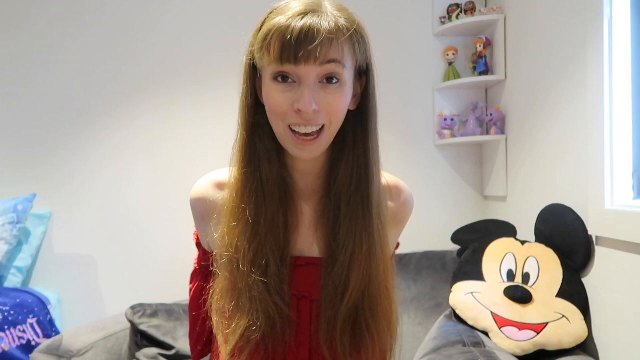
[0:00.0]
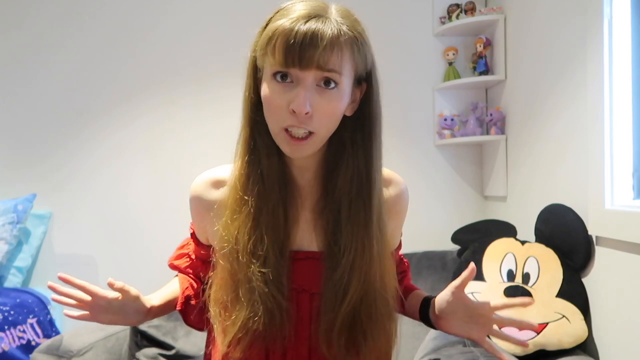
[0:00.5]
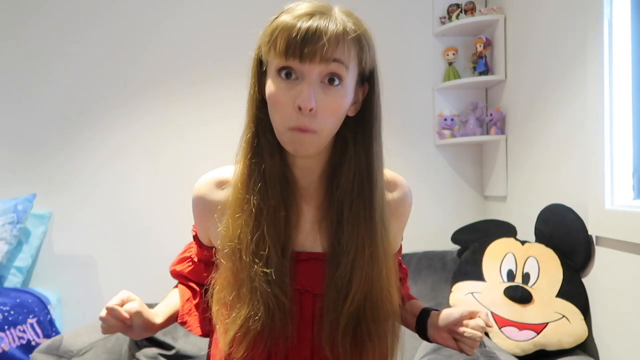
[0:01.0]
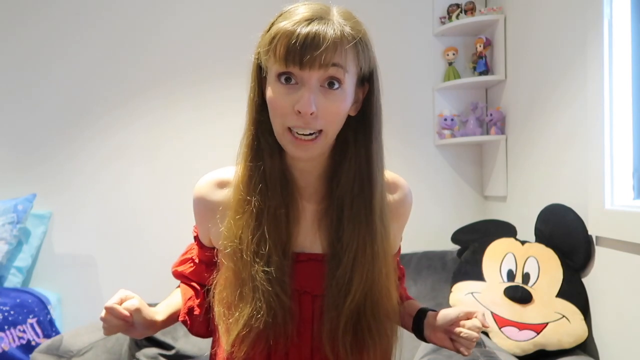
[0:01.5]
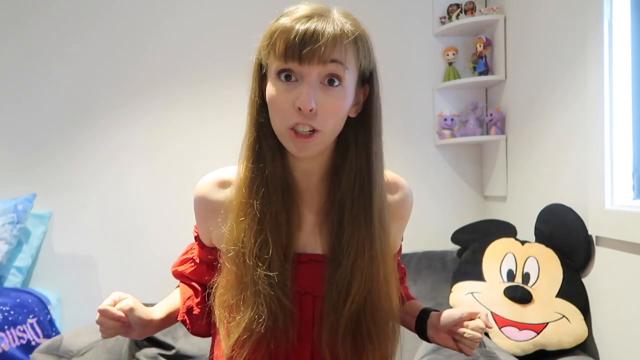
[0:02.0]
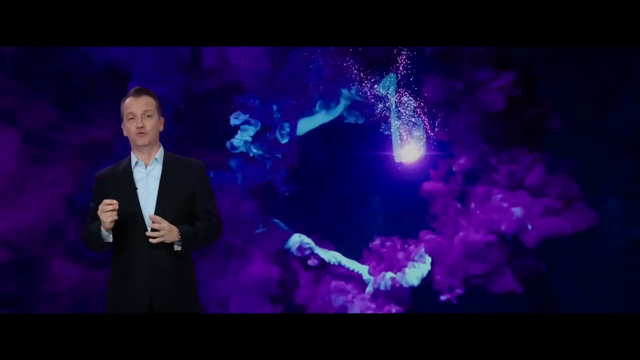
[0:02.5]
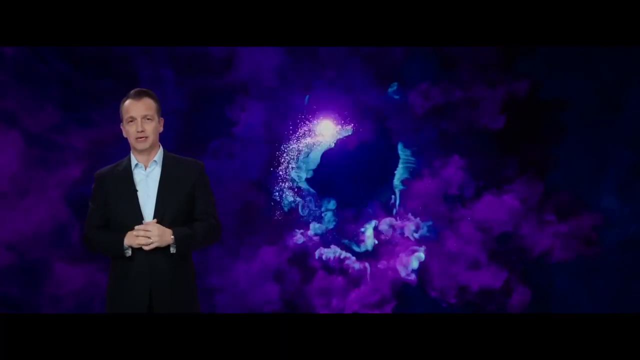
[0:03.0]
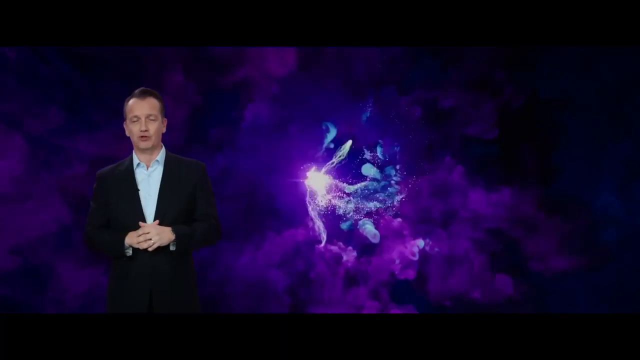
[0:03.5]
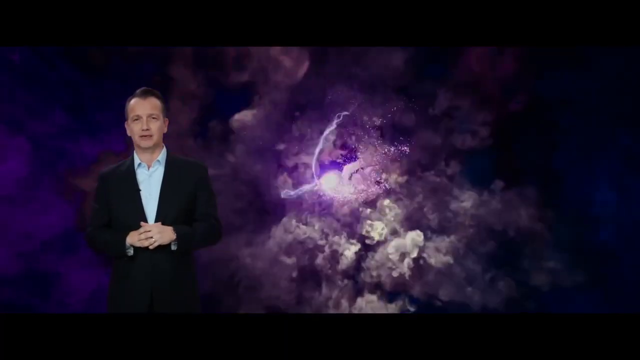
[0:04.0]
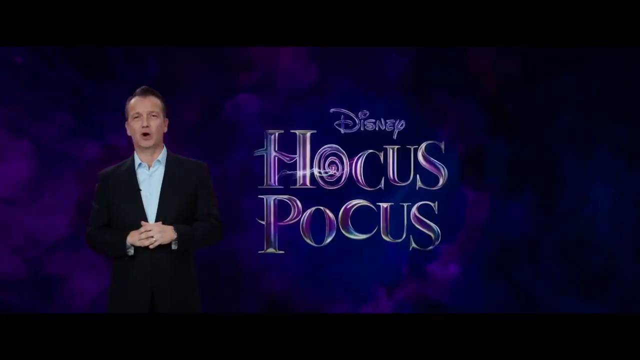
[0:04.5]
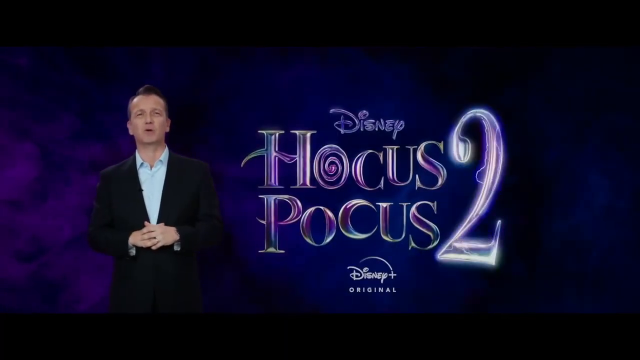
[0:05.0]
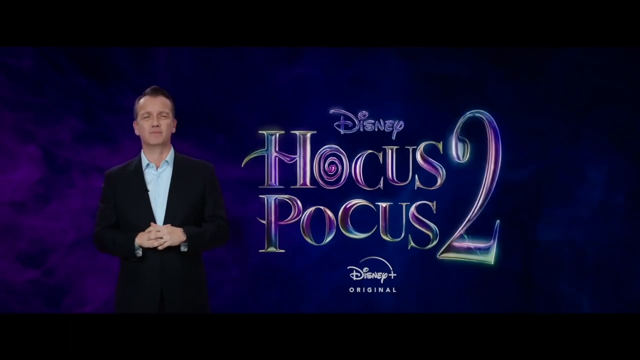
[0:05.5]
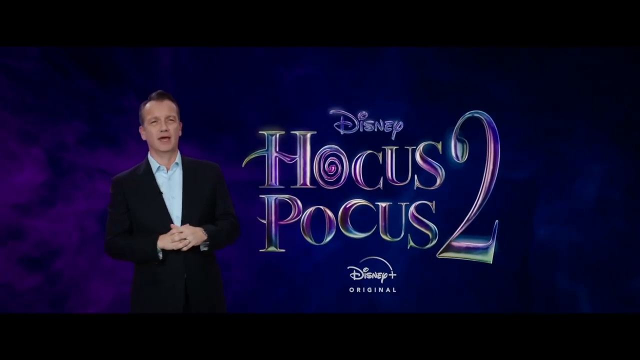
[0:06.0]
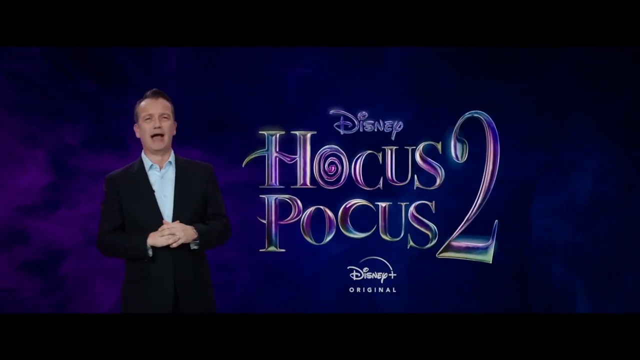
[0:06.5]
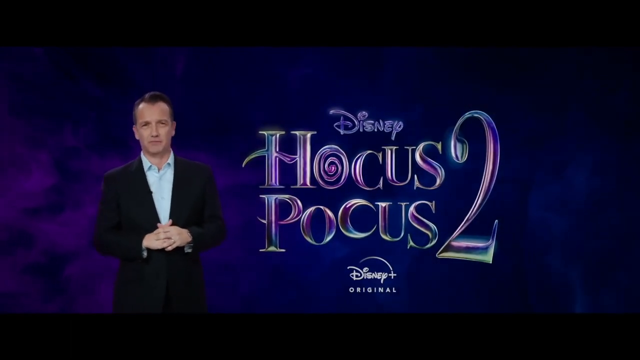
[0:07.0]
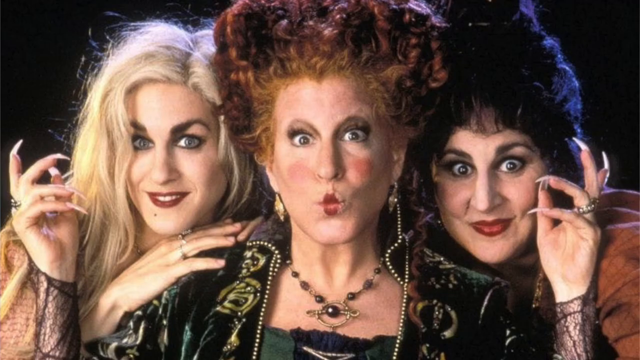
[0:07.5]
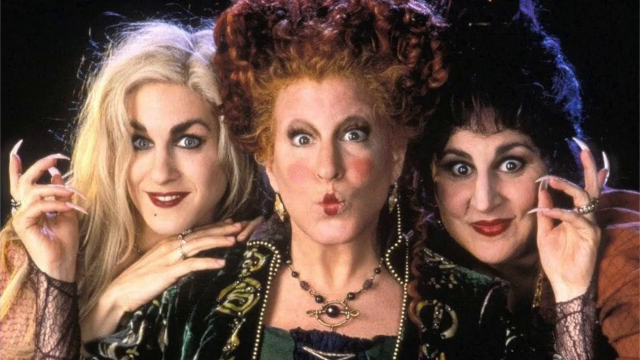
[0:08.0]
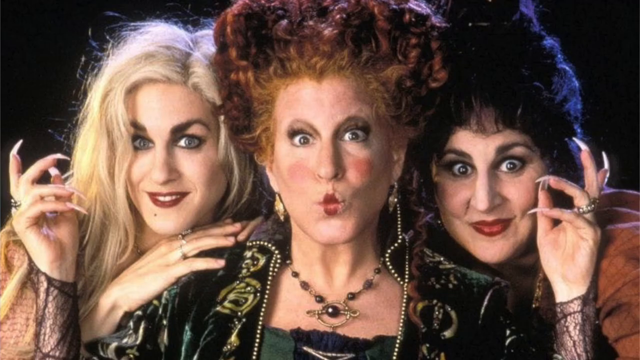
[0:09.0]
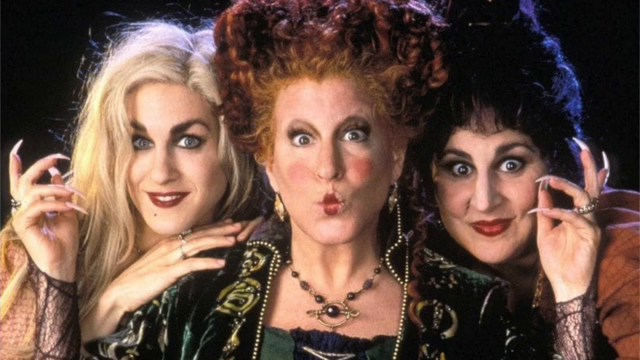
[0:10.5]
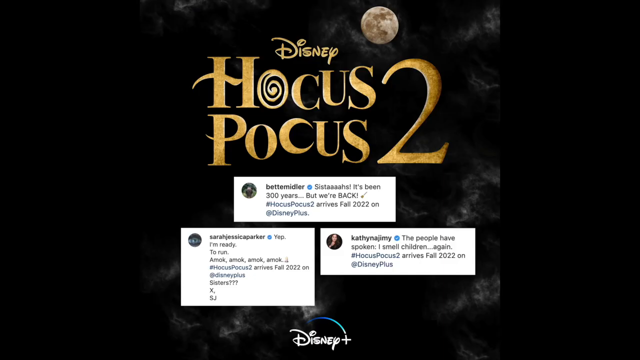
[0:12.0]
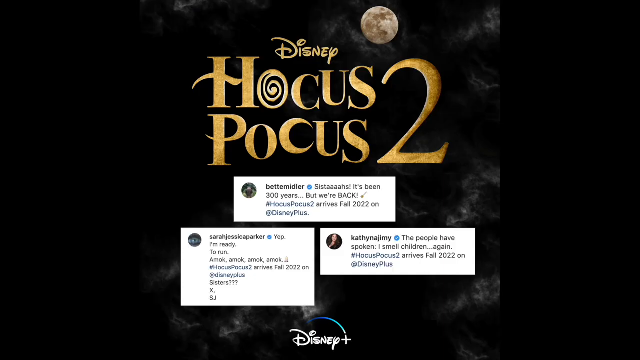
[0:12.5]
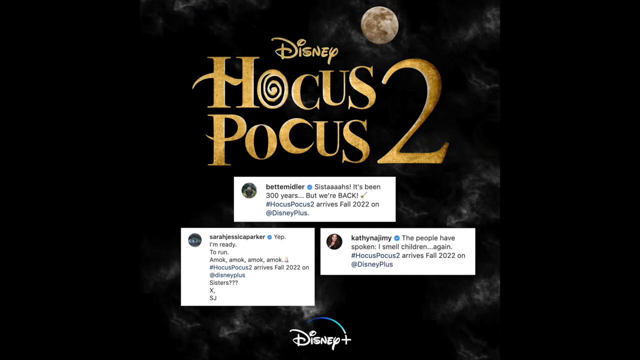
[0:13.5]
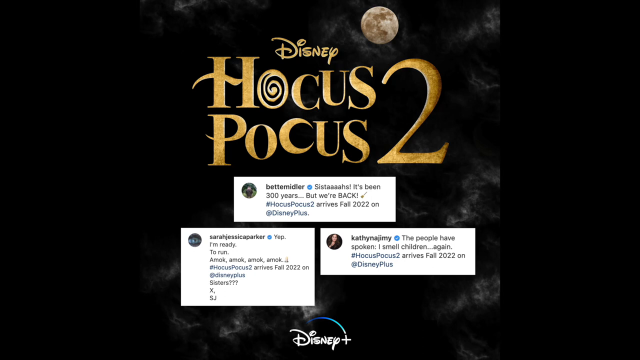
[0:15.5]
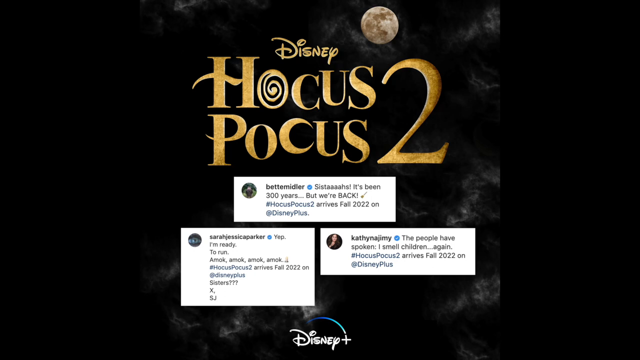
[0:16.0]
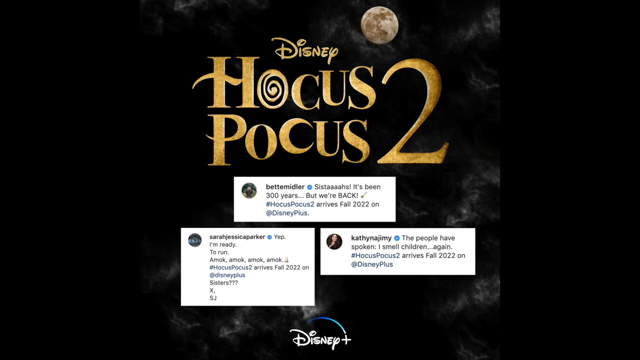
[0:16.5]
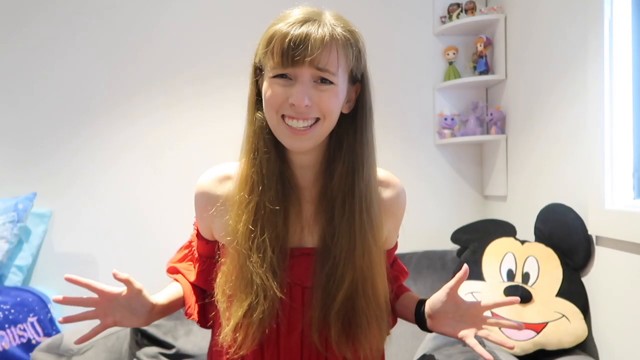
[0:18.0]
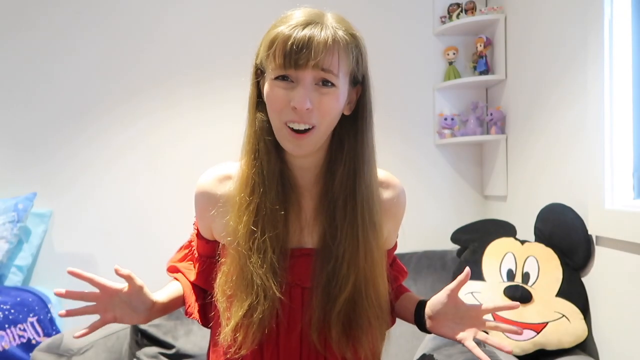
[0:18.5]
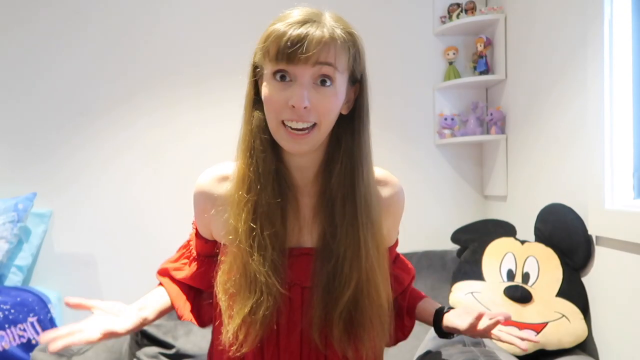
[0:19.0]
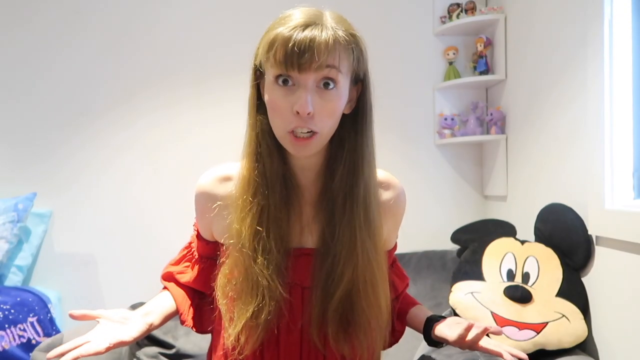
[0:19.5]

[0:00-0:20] A mix of cartoons appears, including Mickey Mouse. A young lady wearing a red dress is in a room decorated with cartoons, including Elsa, Peppa Pig and Mickey Mouse; her bed looks like a closet. She is narrating about Hocus Pocus 2. The Mickey Mouse is black and yellow. A picture shows women who look like witches all together. A gentleman wearing a black suit and a glove is talking.